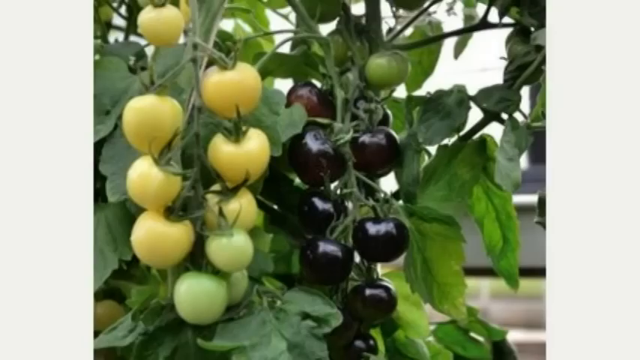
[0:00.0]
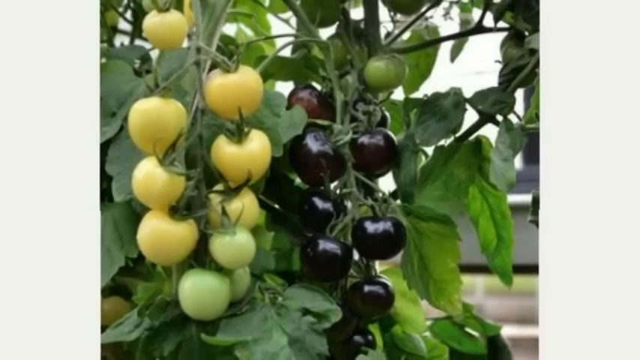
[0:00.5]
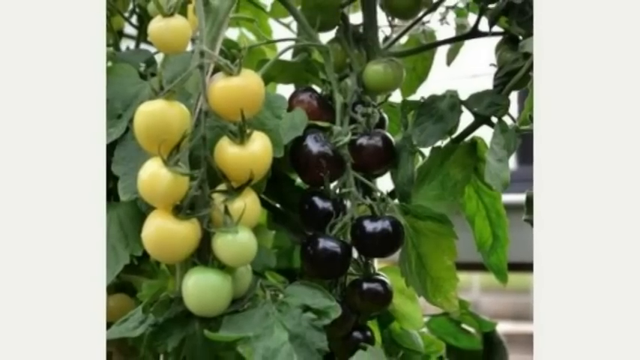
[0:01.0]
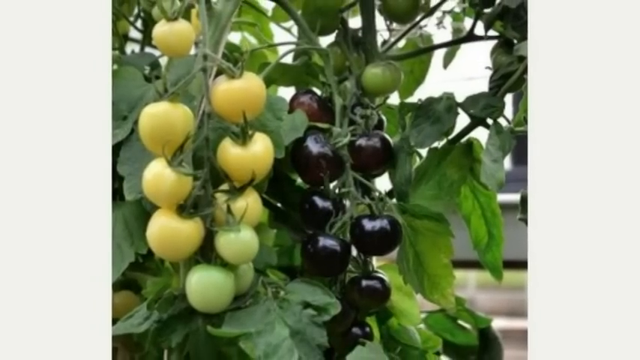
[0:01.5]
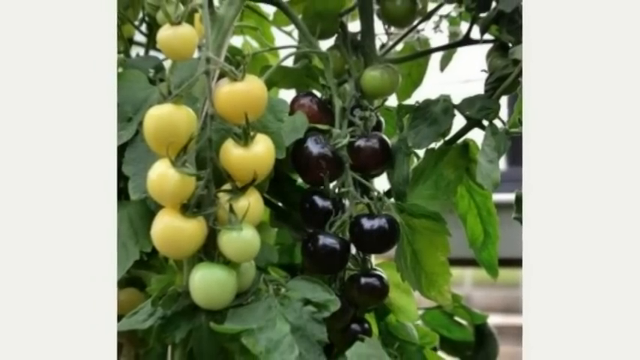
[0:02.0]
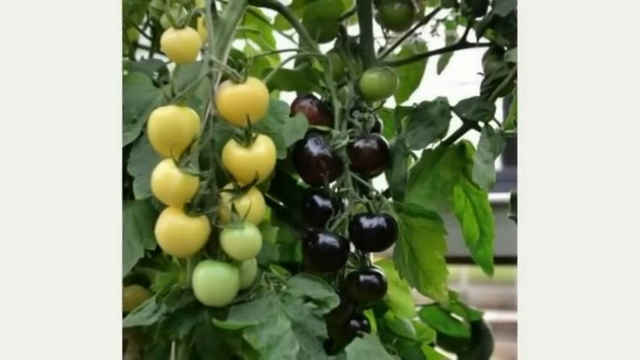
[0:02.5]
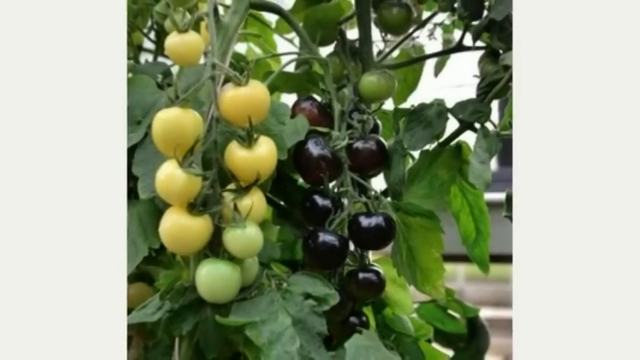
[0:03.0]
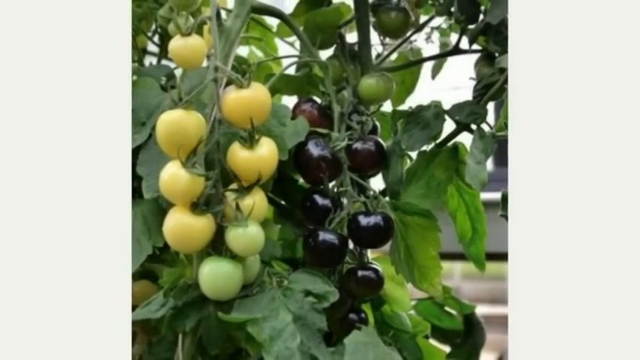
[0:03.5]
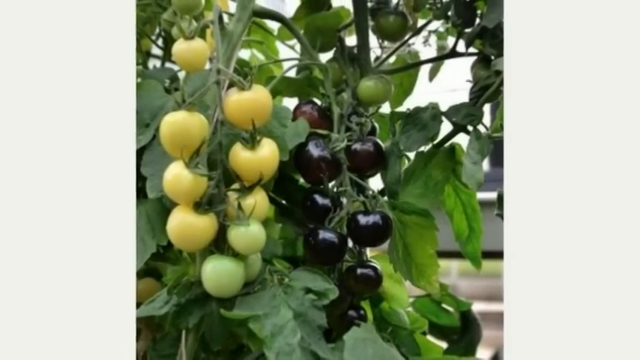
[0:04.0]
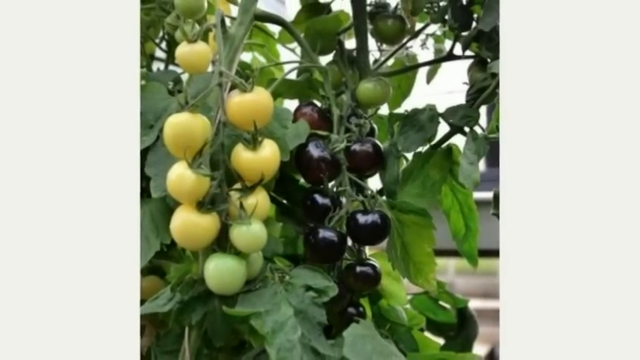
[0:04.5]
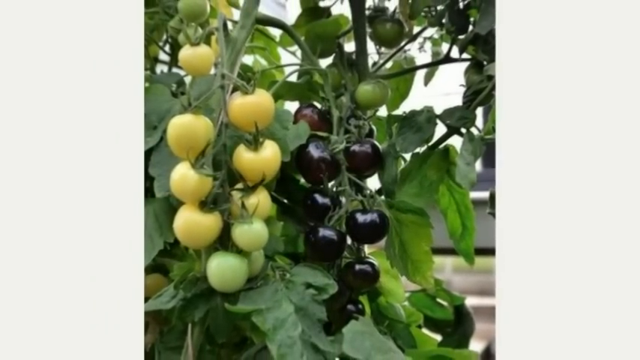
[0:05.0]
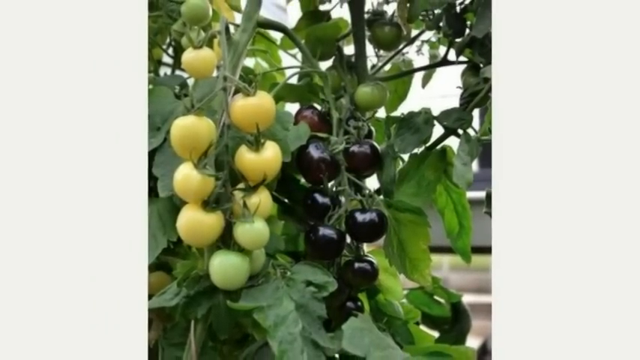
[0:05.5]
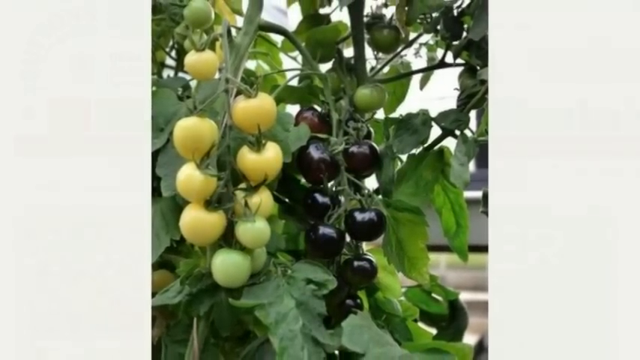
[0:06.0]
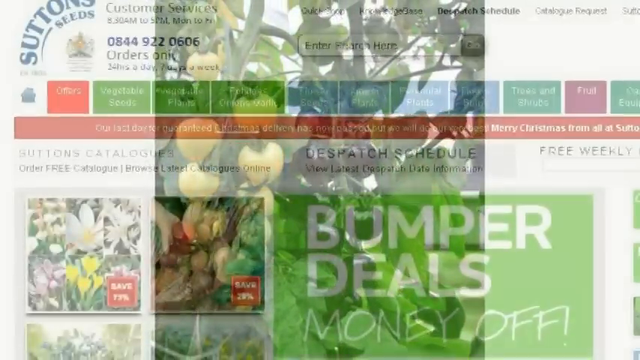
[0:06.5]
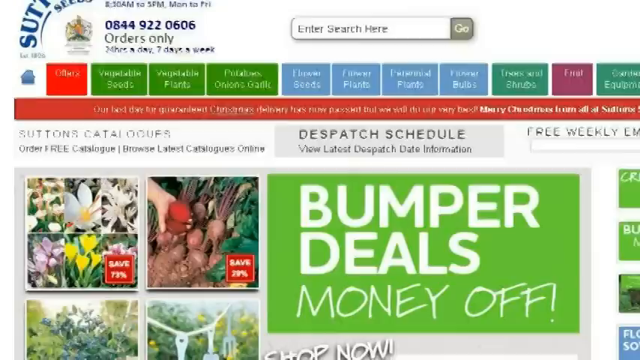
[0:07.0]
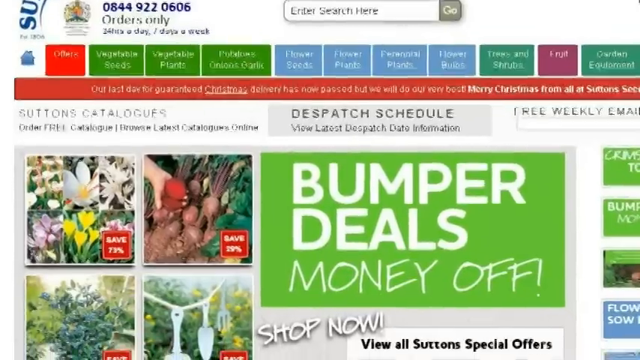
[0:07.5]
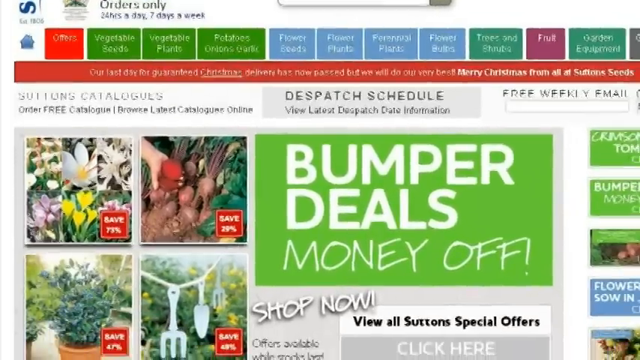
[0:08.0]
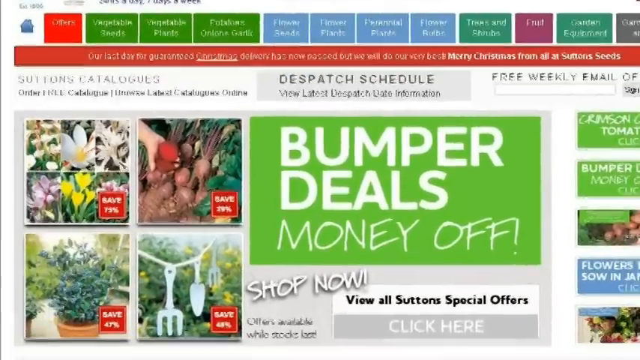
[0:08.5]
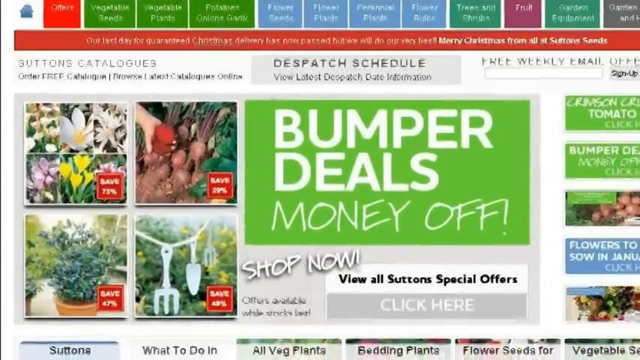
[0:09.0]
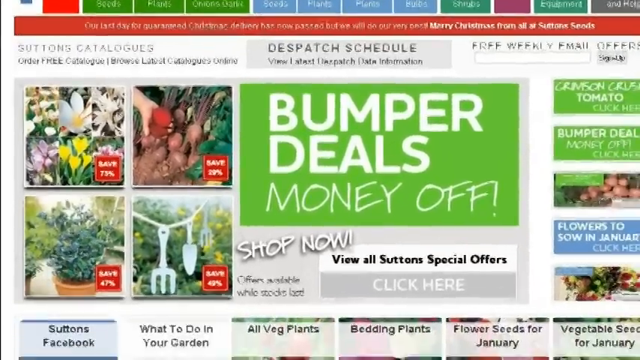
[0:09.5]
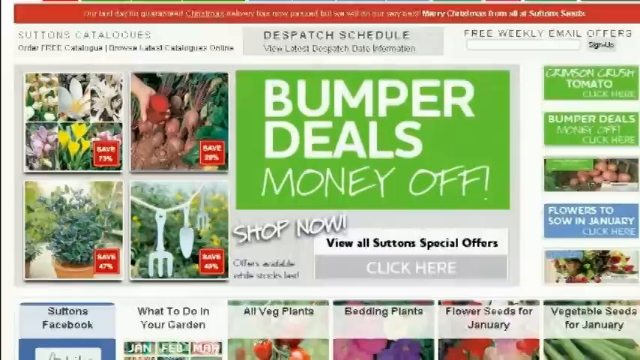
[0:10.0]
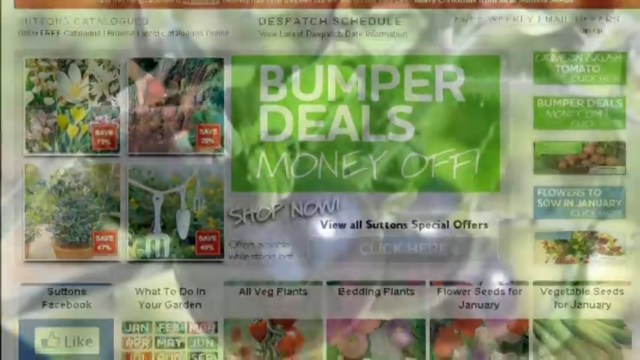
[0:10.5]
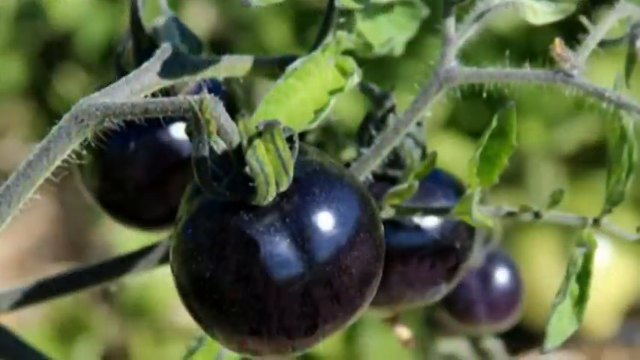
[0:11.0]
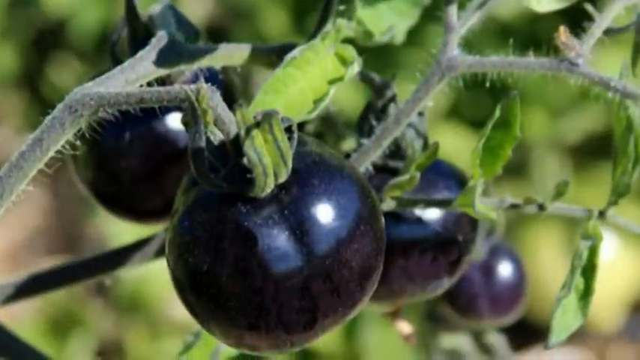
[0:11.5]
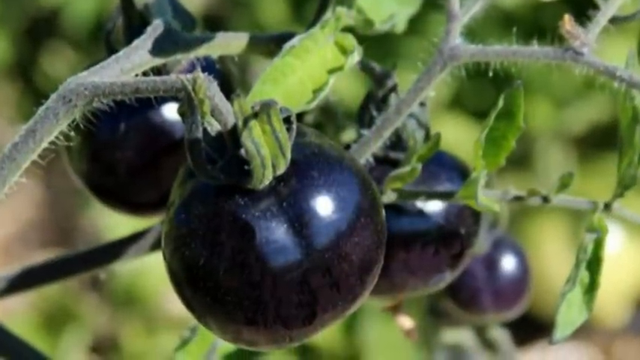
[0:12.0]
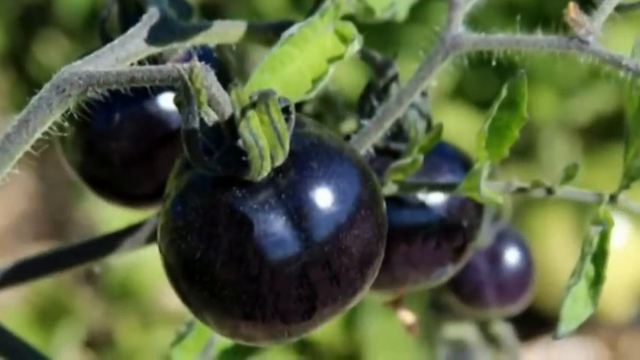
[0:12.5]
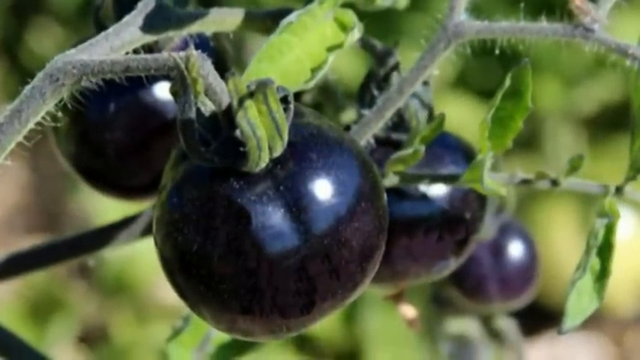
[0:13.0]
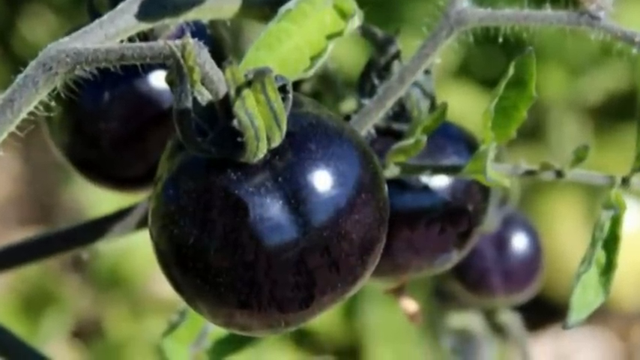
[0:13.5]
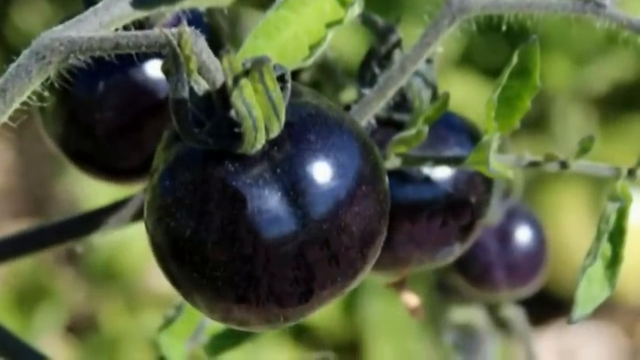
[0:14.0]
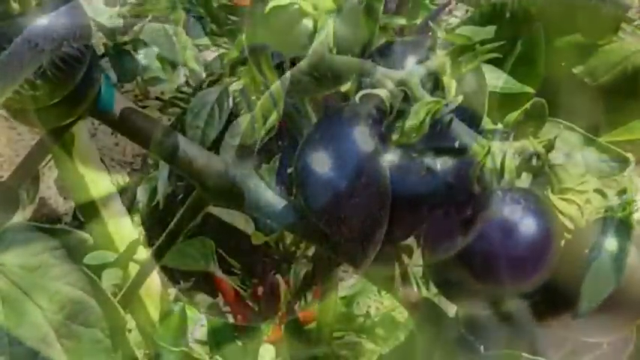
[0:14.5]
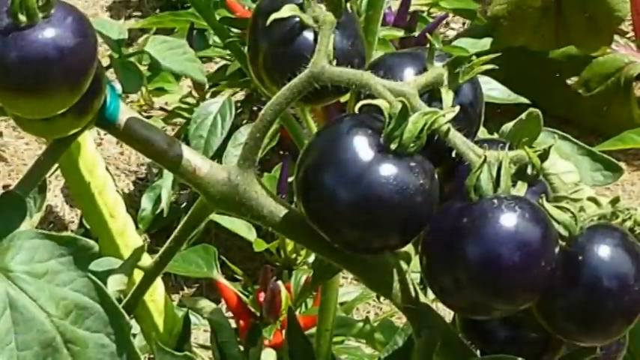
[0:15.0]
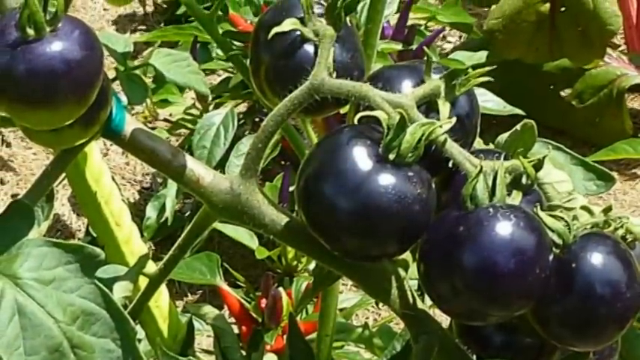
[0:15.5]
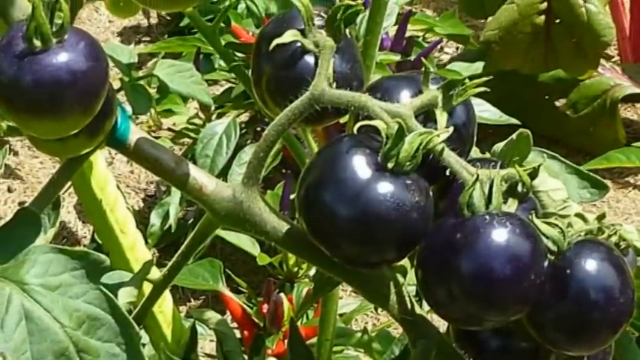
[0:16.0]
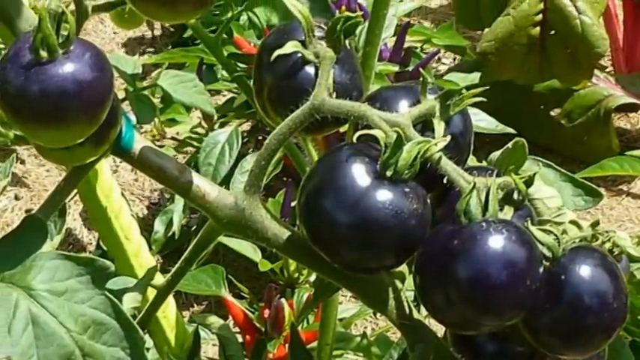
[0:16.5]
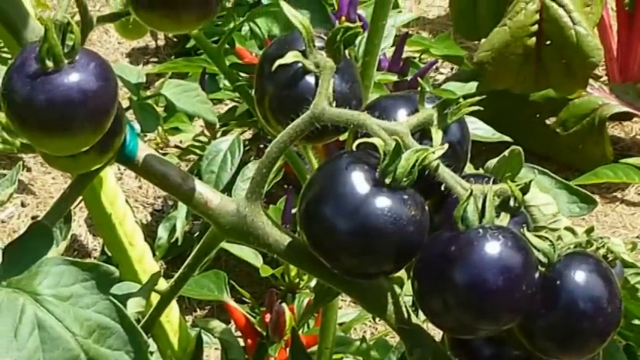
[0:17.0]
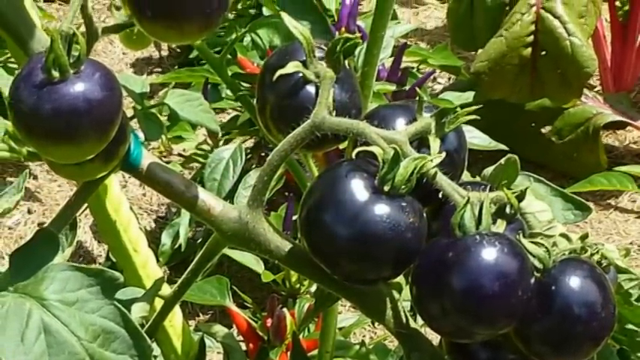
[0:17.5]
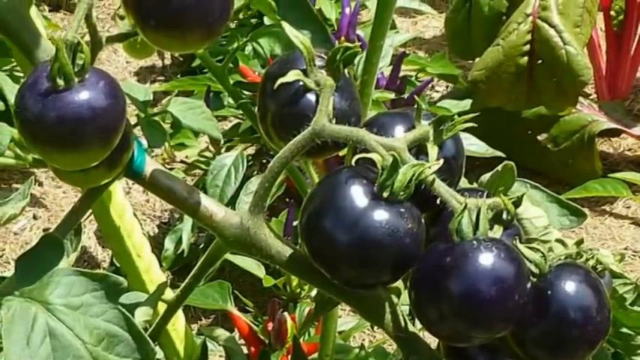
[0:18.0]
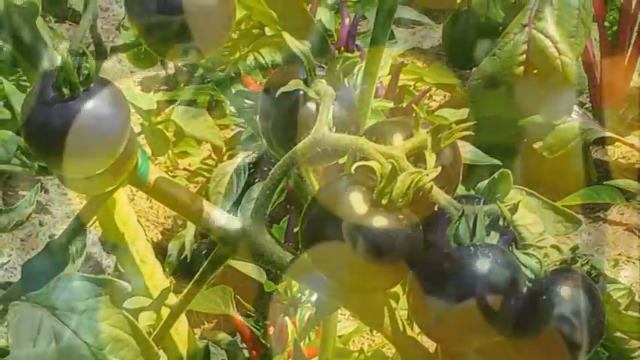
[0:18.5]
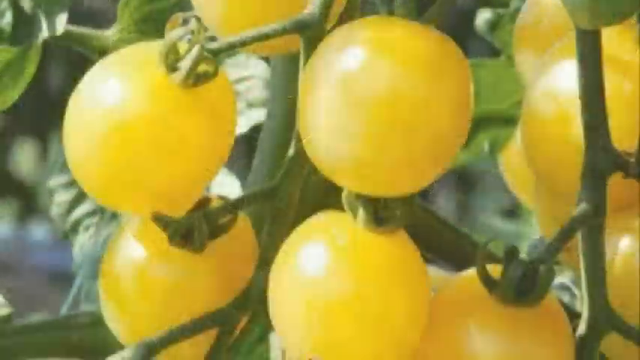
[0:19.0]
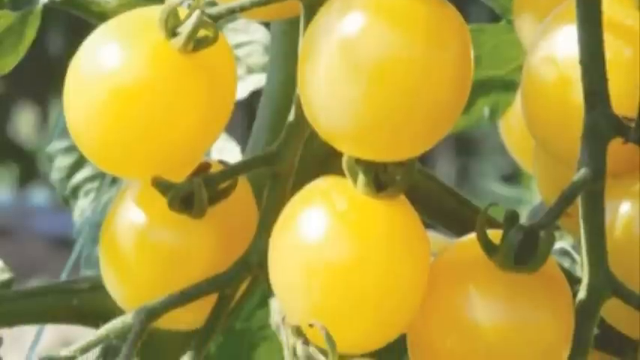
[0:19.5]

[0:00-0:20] Tomatoes grow on a farm, and the words "shop now" are shown. There are different kinds of tomatoes: some are black, which look very strange, while others are still fresh and unripe in the garden and green in color. Some tomatoes are yellow. Judging by the fruits, the tomatoes appear very healthy. Below the tomatoes, healthy spinach is growing, and pepper is also growing down there. The video pops up as it changes from one video to another.